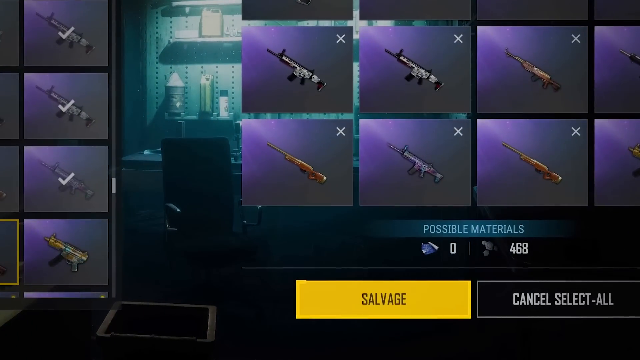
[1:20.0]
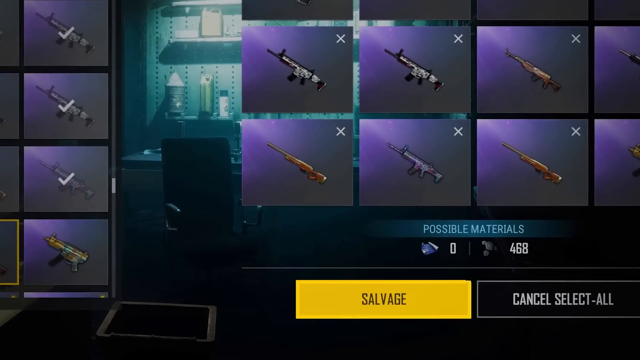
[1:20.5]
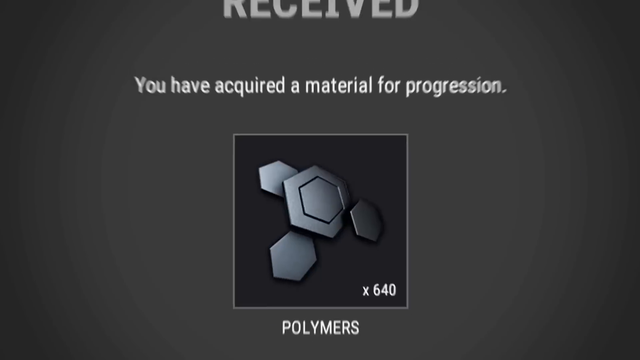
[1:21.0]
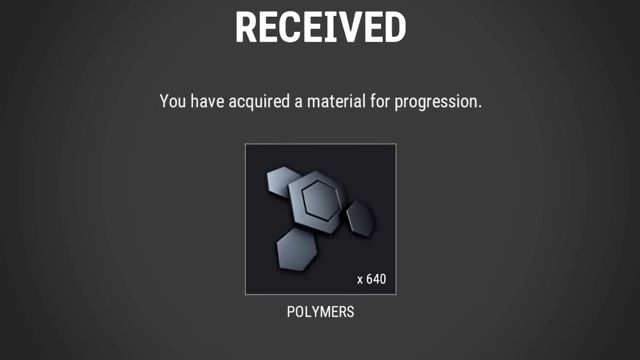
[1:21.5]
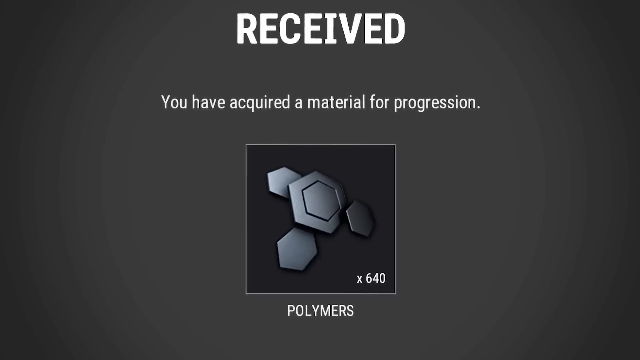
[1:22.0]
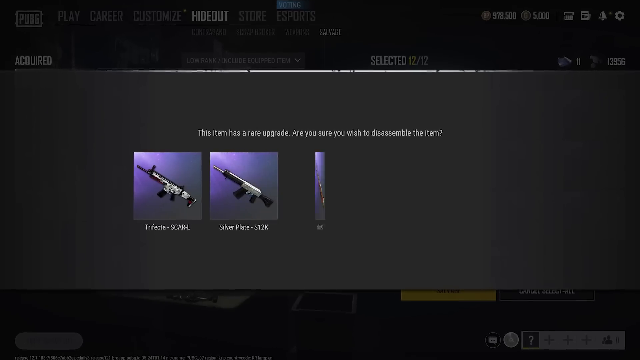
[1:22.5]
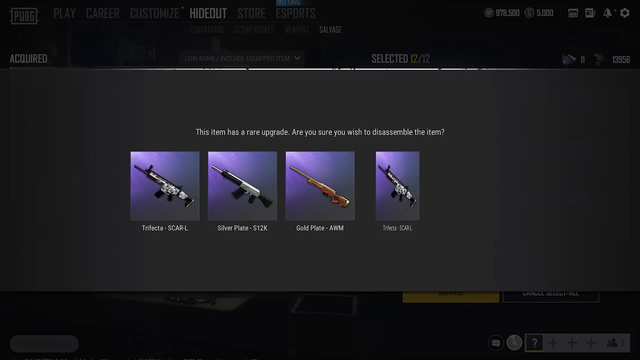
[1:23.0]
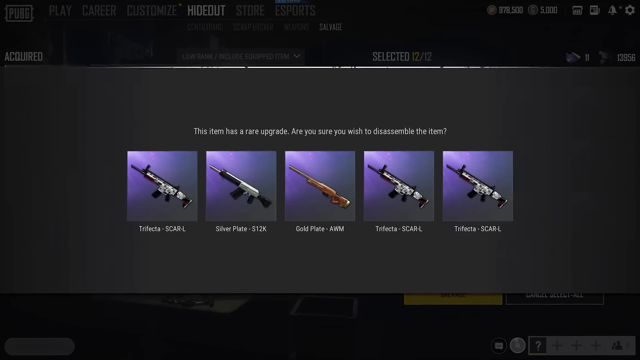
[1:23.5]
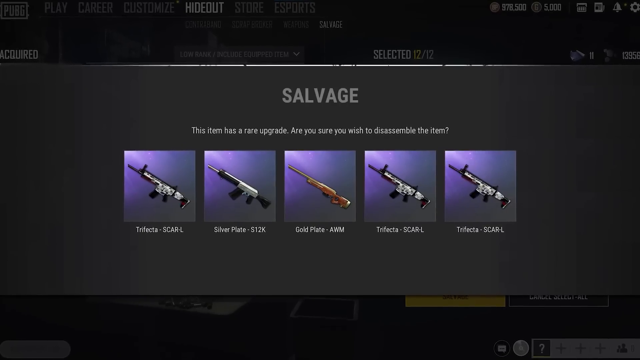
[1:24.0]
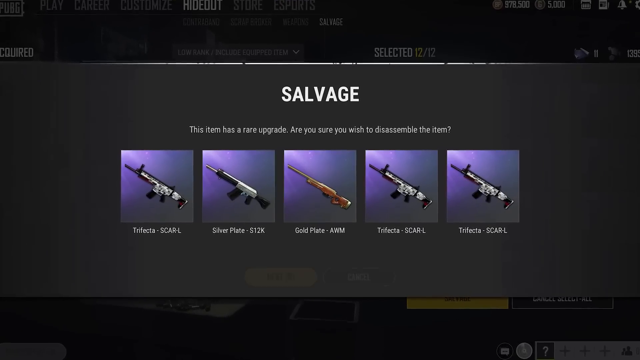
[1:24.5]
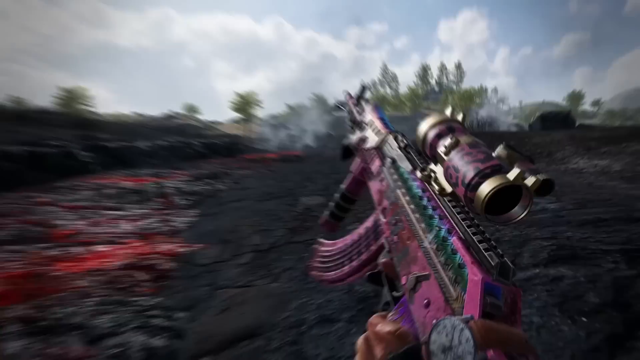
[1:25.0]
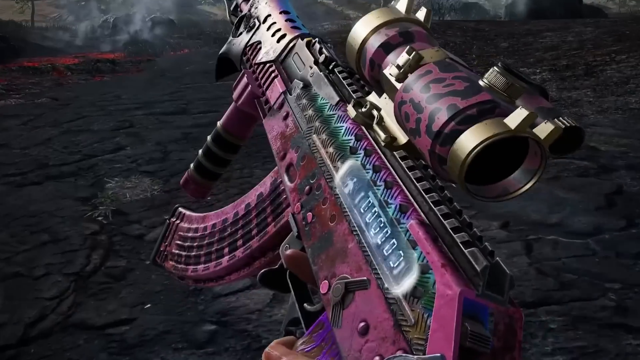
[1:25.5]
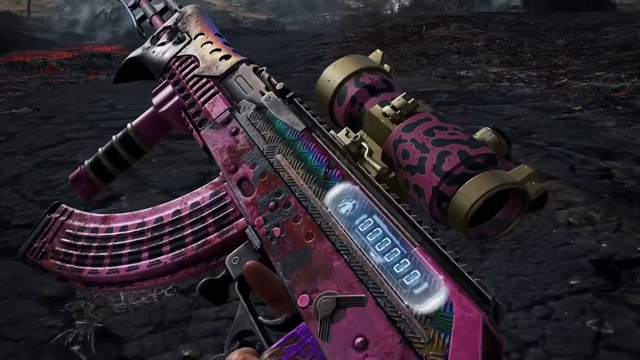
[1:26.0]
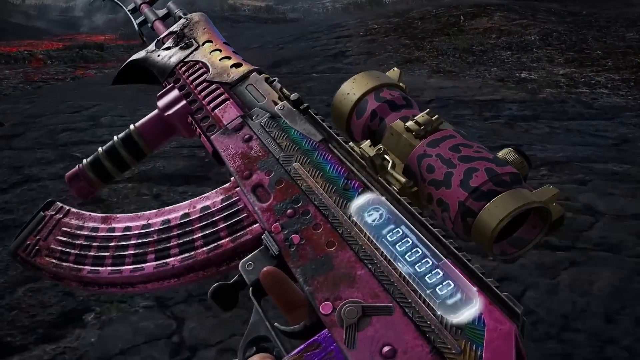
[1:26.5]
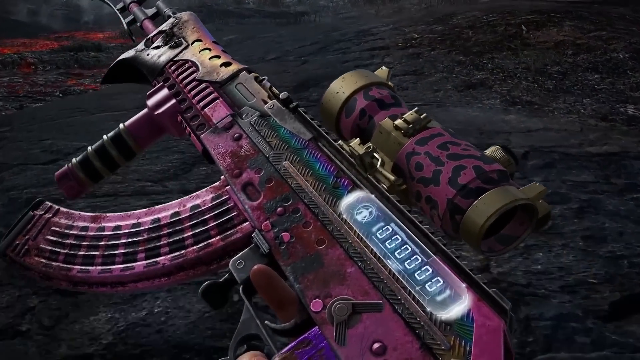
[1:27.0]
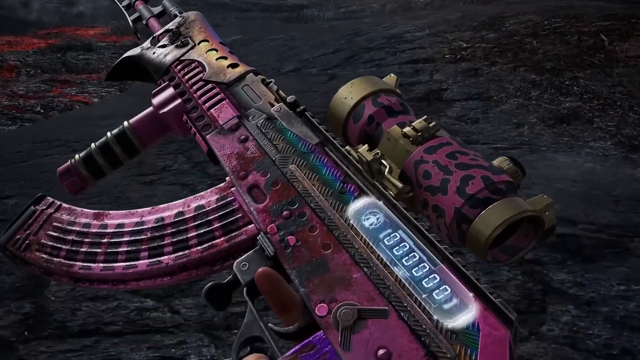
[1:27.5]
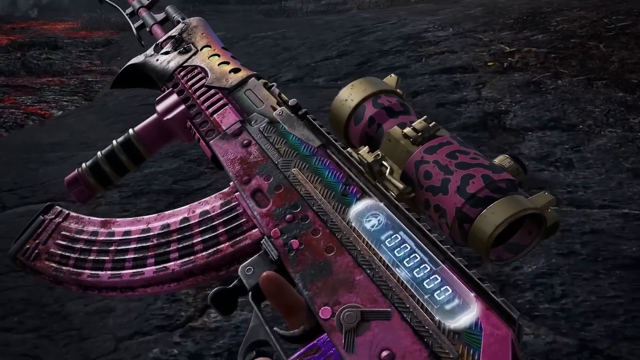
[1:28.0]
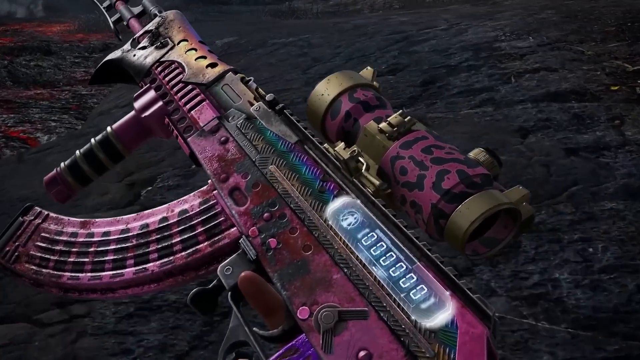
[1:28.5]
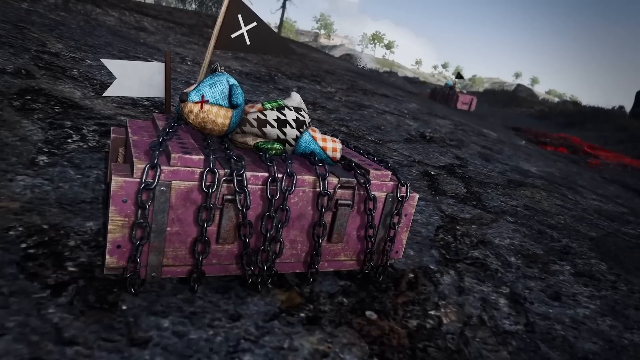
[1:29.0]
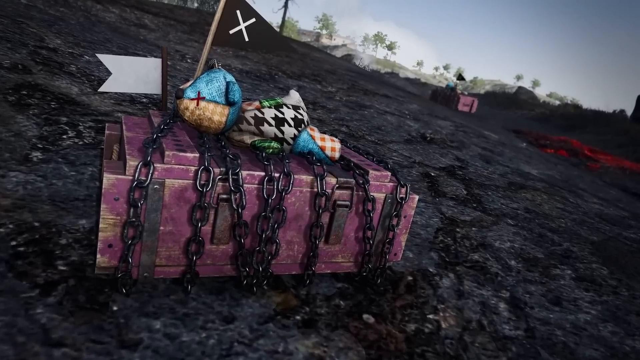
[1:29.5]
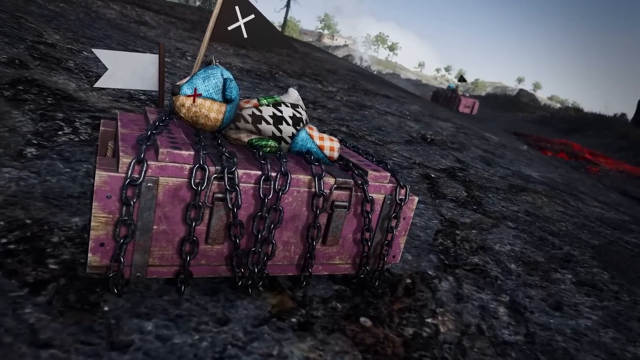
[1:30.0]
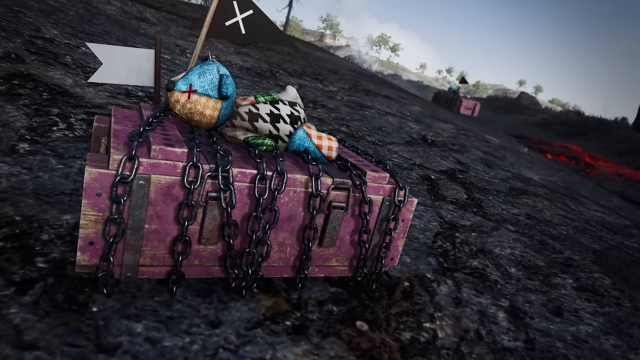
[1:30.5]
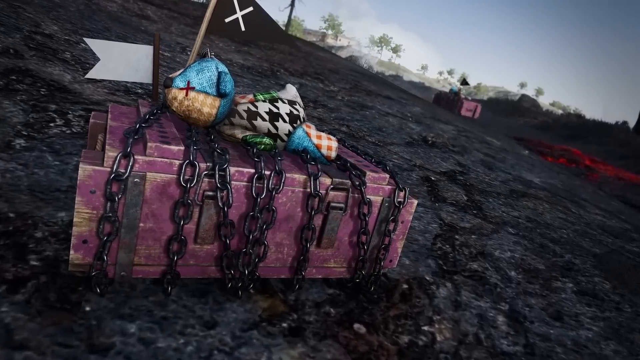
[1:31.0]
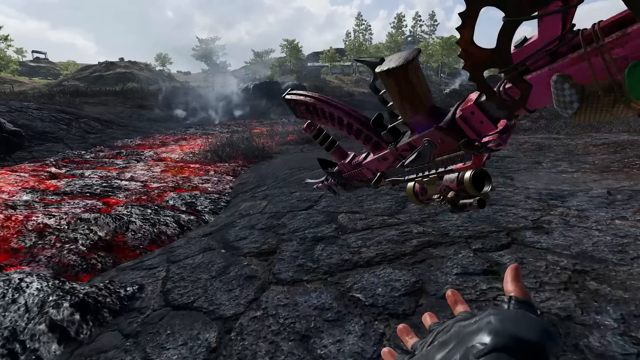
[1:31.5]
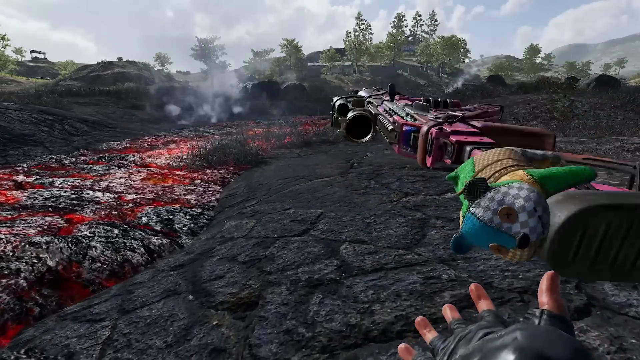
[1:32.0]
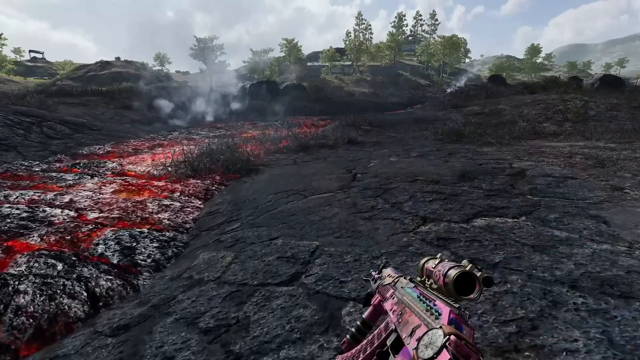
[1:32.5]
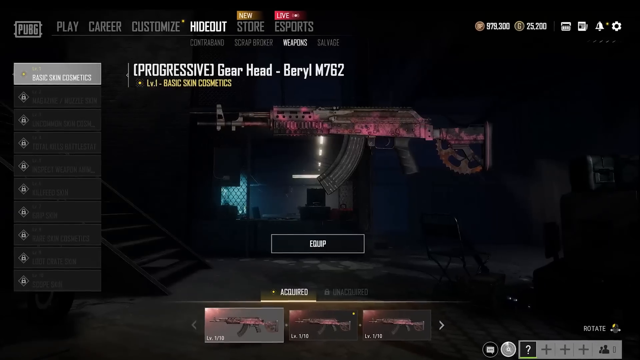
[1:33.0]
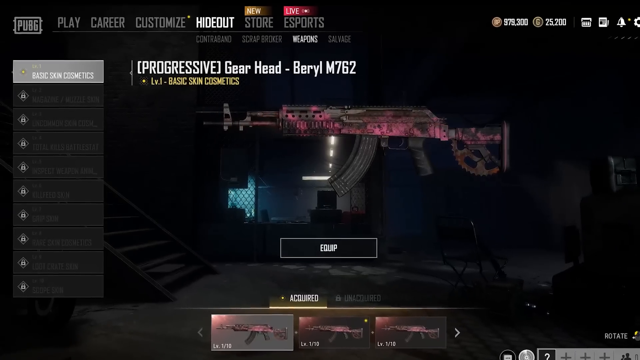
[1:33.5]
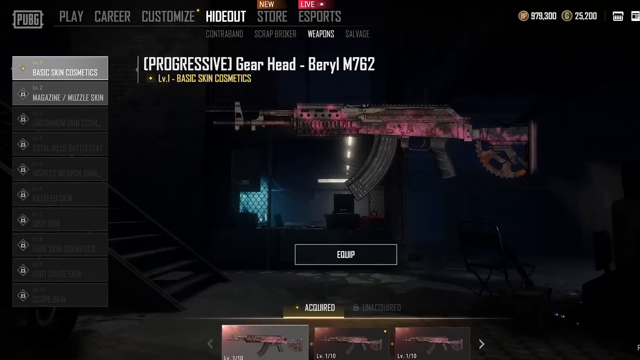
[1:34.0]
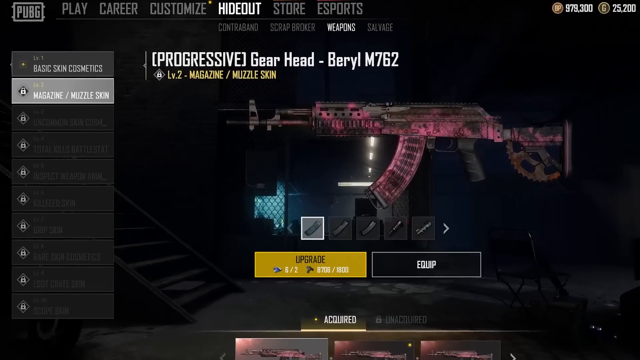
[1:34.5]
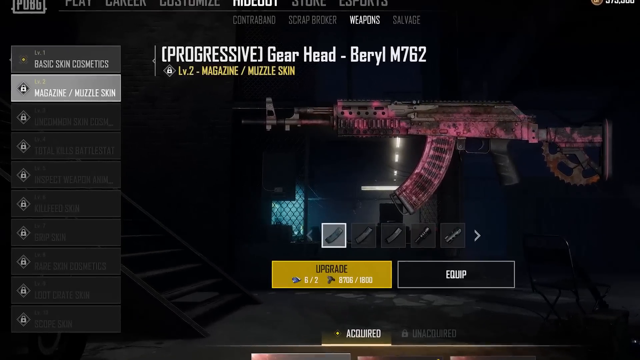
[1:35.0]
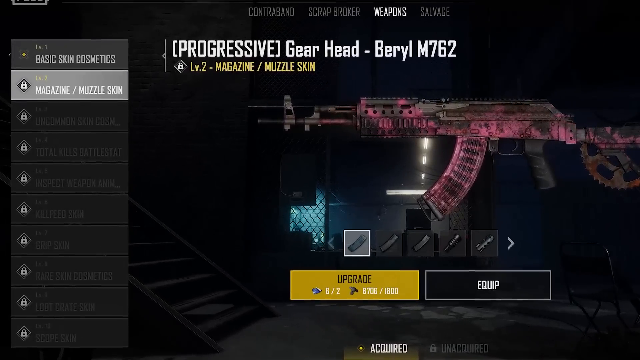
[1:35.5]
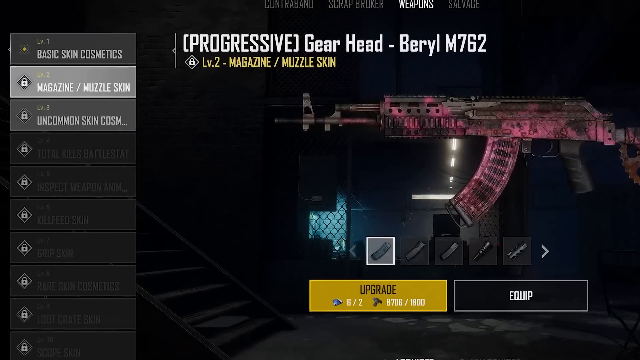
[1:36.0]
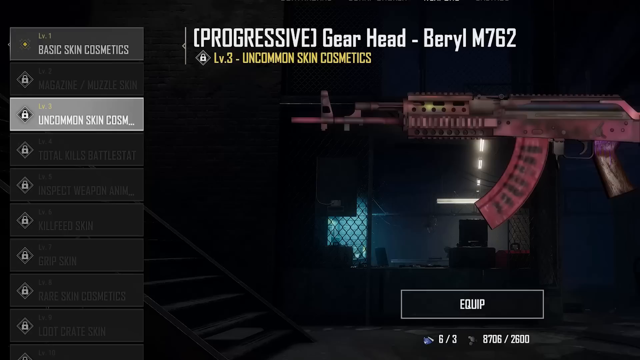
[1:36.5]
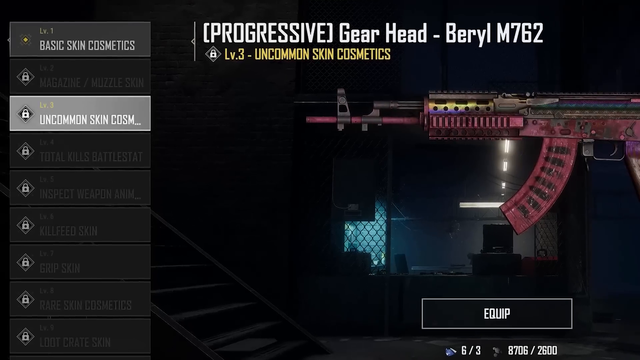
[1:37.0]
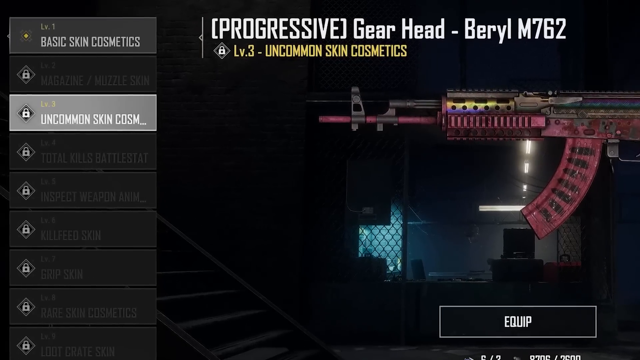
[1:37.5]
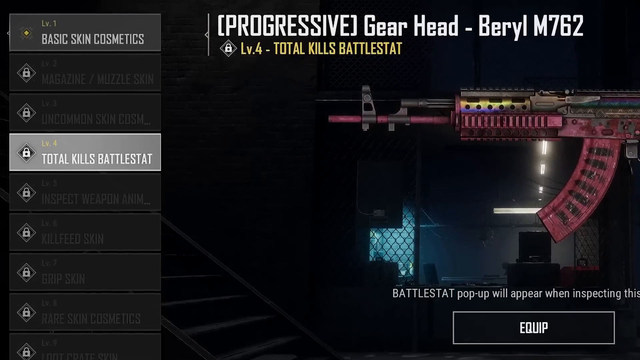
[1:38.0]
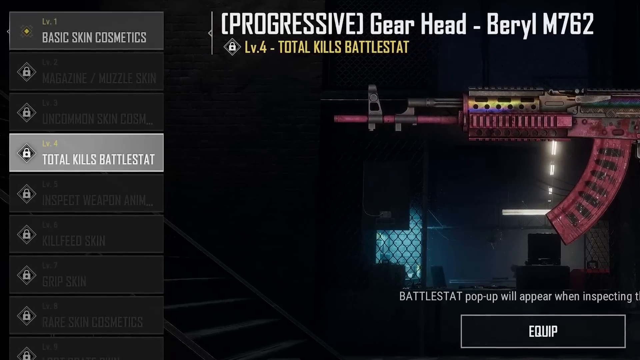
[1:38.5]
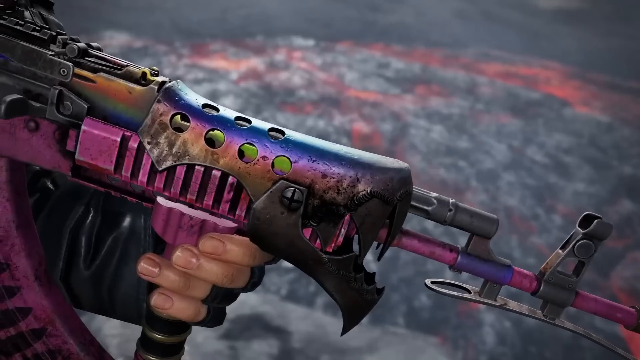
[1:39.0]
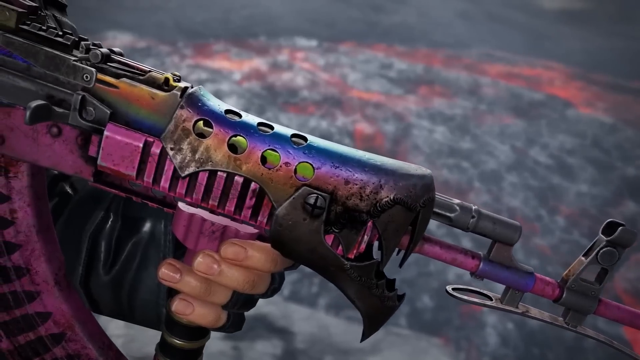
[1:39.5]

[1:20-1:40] A screen says that the player has received material for progression: silver hexagon shapes, with "times 640" indicating how many he received. It is unclear whether he dismantled a gun to get them, as everything happens quickly. The next screen is about salvage; it brings up five different weapons and asks the player whether to disassemble them. A very close-up image of a weapon follows, showing a pink leopard print skin with gold on the edges, apparently the new weapon skin announced on the earlier black screen. Then a pink loot box appears with a patchwork bear laying on its stomach on top of it. The bear's eye has a red cross, and the box is covered in black chains all the way around. A black flag and a white flag come out of the box. The person then flips his gun; it spins to the right and lands back the right way up in the man's hand. Next, apparently, a screen shows the person adding different cosmetics and skins to his gun.